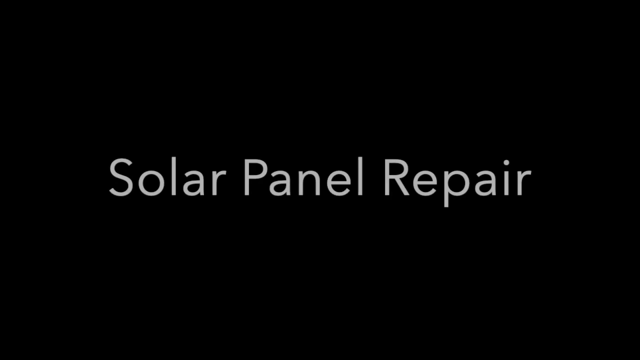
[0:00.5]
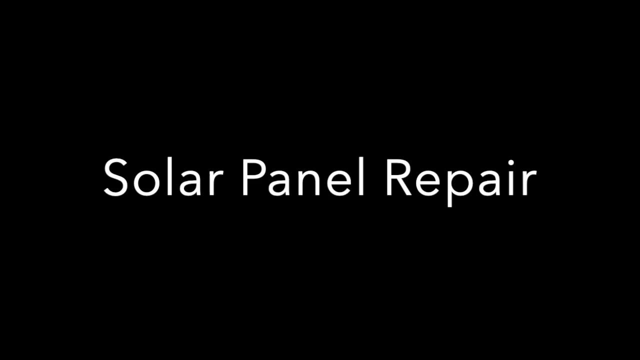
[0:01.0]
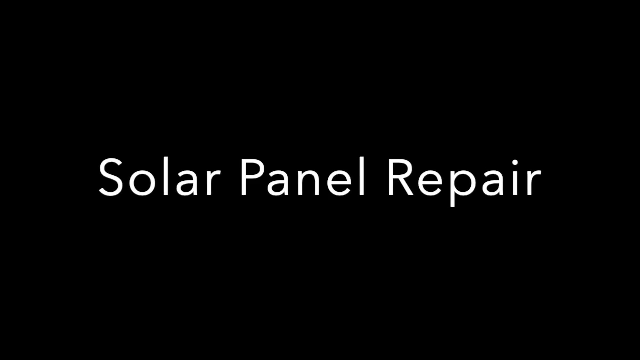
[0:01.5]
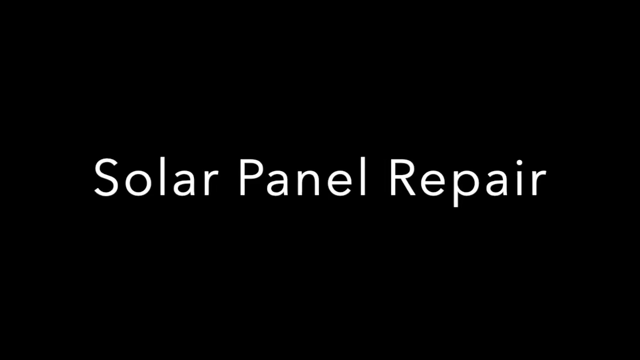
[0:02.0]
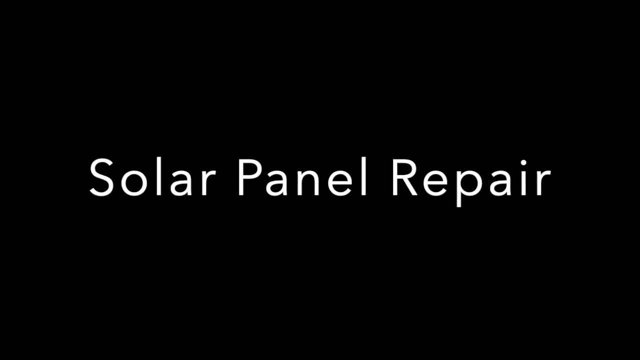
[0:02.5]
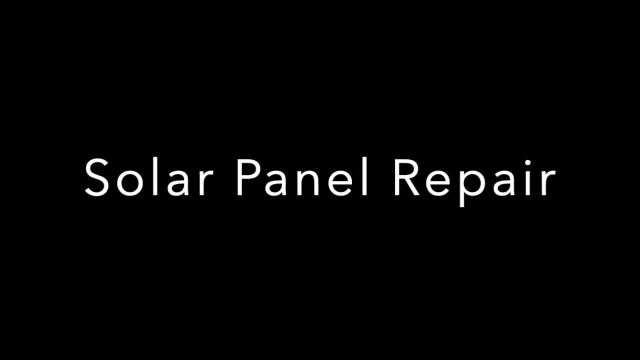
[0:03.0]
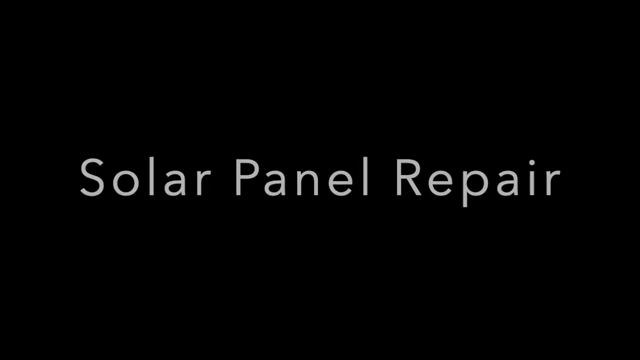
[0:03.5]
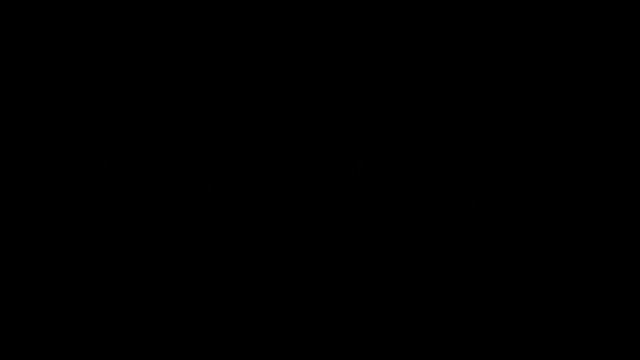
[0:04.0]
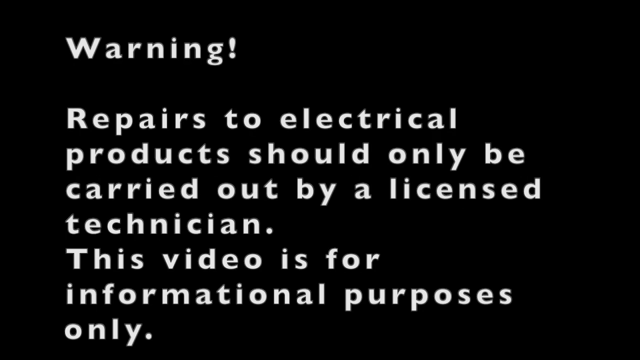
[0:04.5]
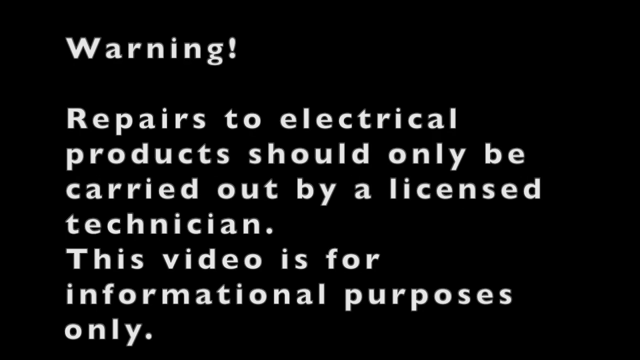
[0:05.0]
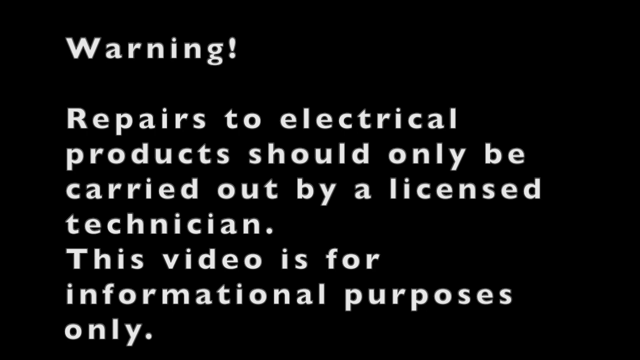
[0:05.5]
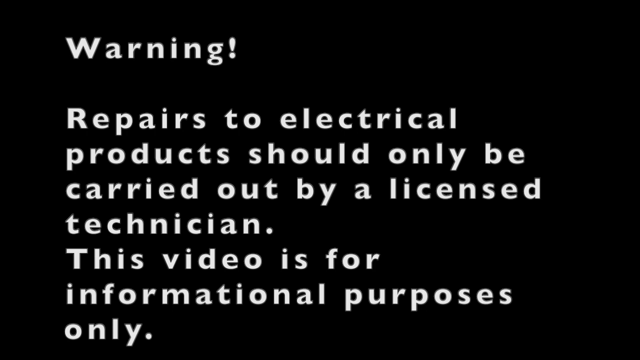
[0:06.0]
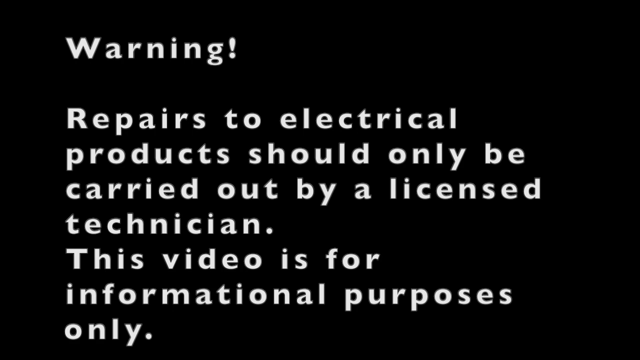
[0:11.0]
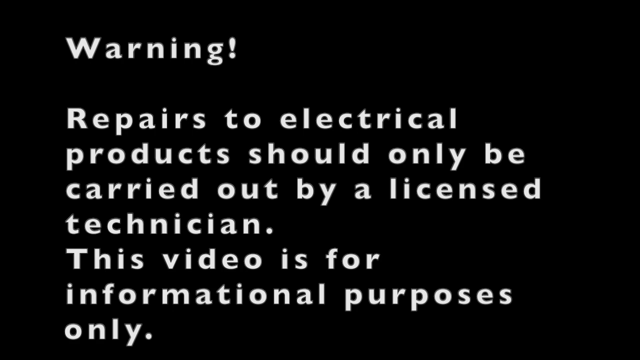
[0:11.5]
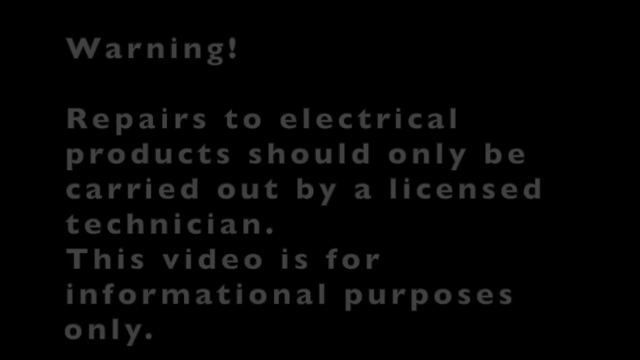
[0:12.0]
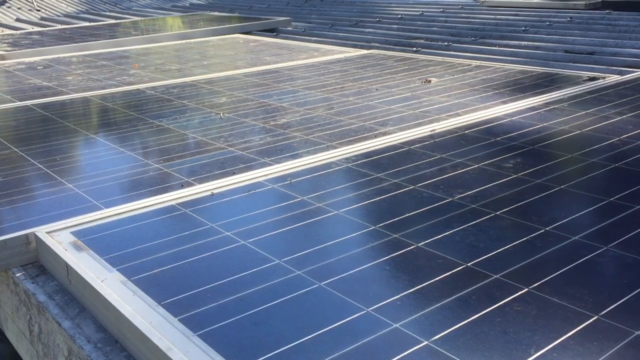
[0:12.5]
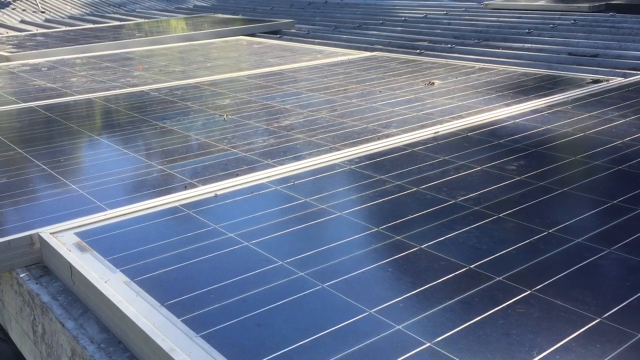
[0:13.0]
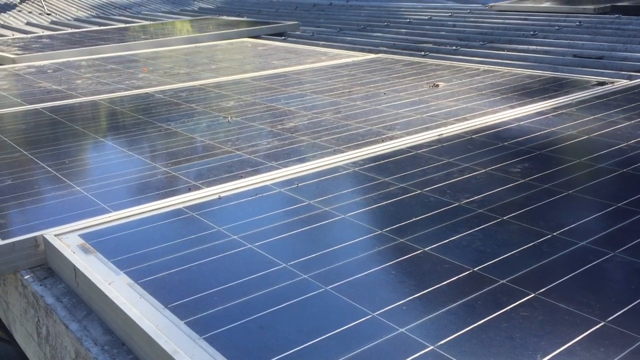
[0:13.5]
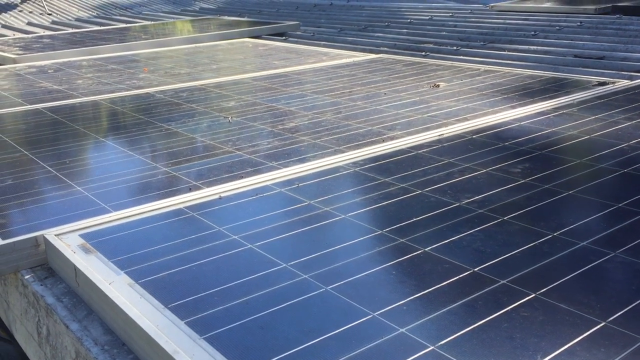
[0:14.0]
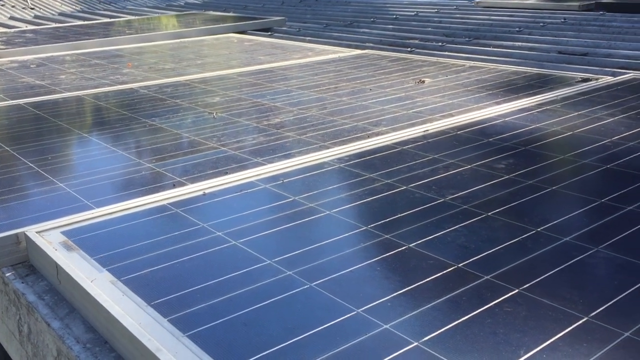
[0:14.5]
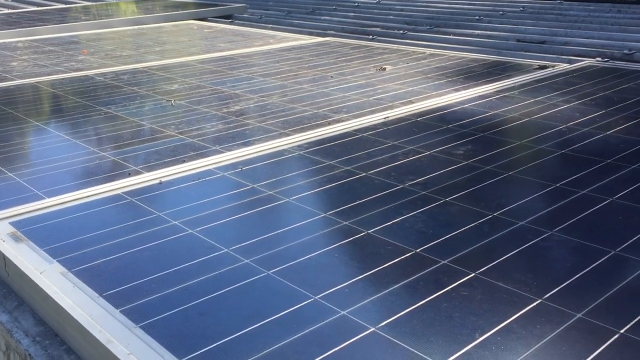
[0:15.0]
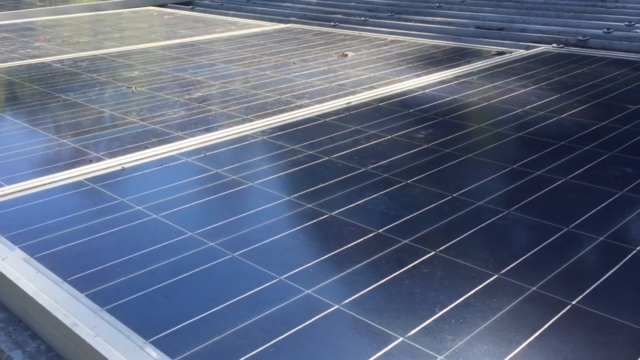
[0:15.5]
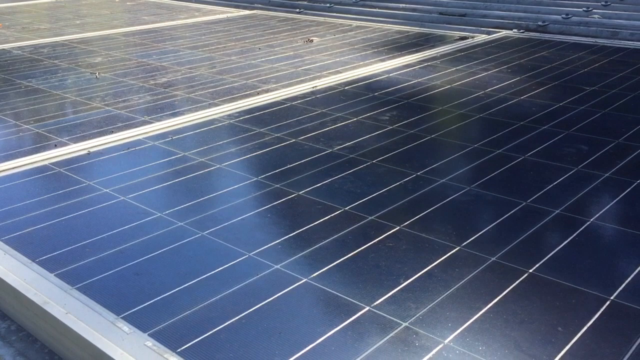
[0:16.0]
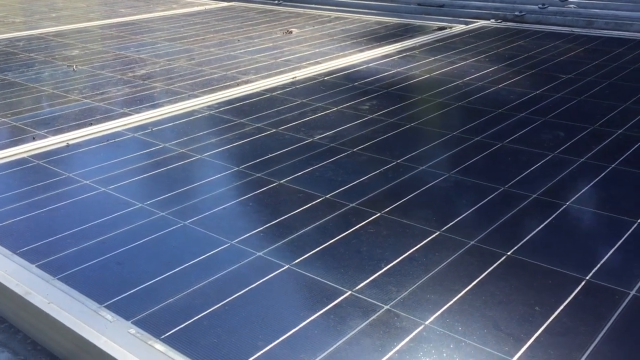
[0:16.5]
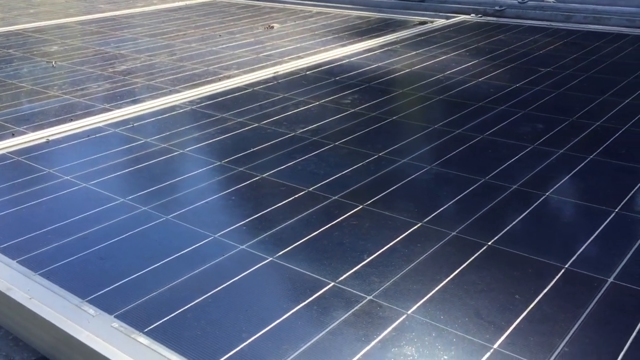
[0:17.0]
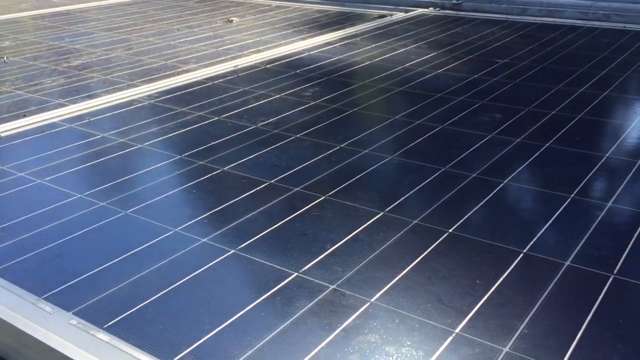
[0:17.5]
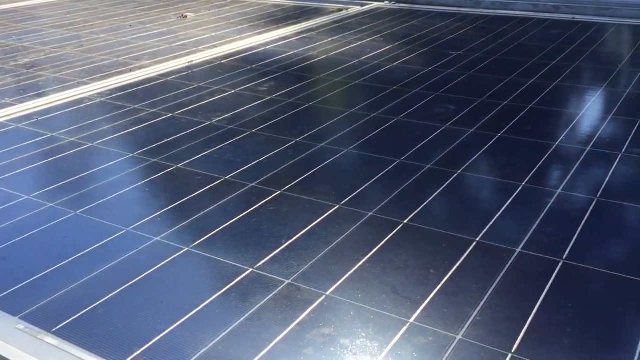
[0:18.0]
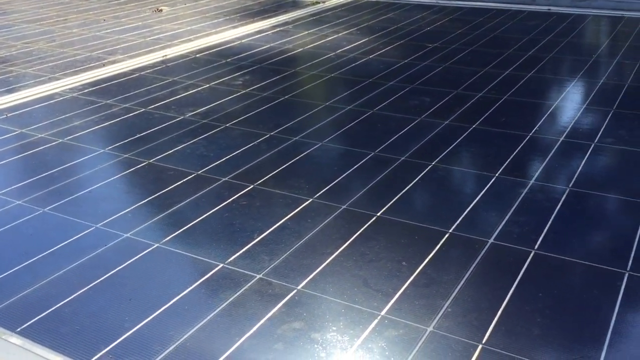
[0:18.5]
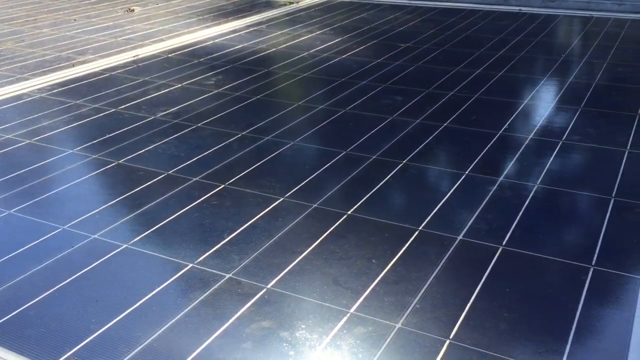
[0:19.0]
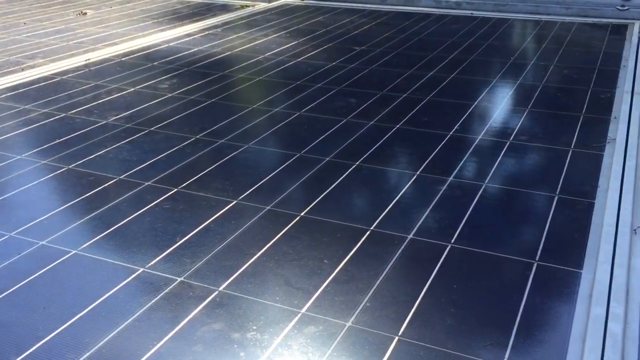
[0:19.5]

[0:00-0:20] The video opens on a black screen with words coming out from the center and growing larger; they read "solar panel repair" in white text. This fades out, and white text appears from top to bottom: "Warning repairs to electrical products should only be carried out by a licensed technician. This video is for informational purposes only." The scene then cuts to a view of a solar panel area, with solar panels lined up flat diagonally. The panels are each framed and rectangular, lying flat against one another with no gap between the three large ones visible, noticeably from the lower right corner outward. Each panel is lined both vertically and horizontally; it is unclear whether these are individual pieces or lines of another material. Thin white lines break the panels up into sections in what looks like patterns, for example two narrow lines, one wider line, two narrow lines, and one narrow line within a panel.